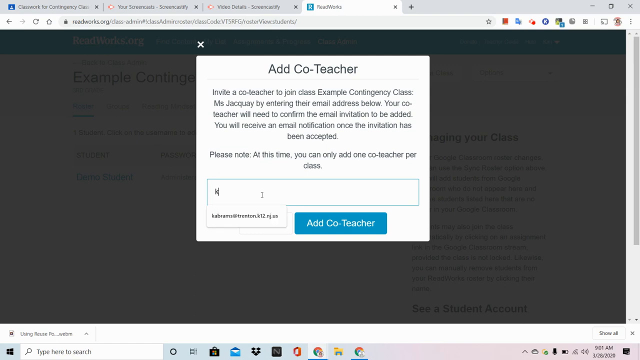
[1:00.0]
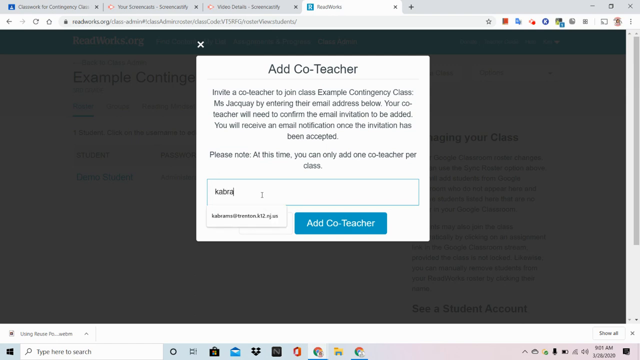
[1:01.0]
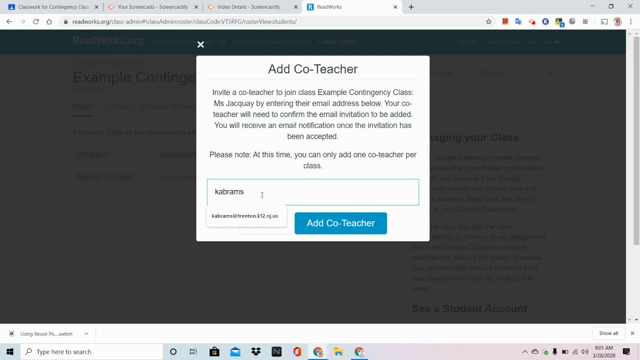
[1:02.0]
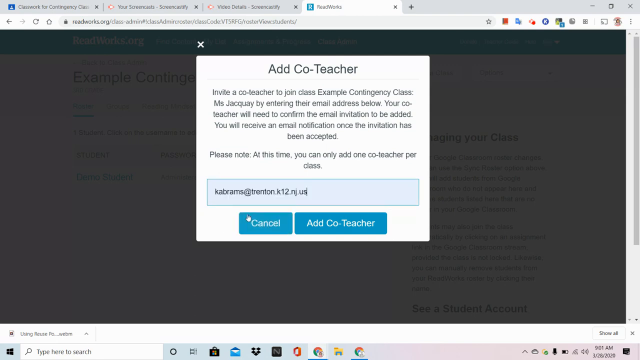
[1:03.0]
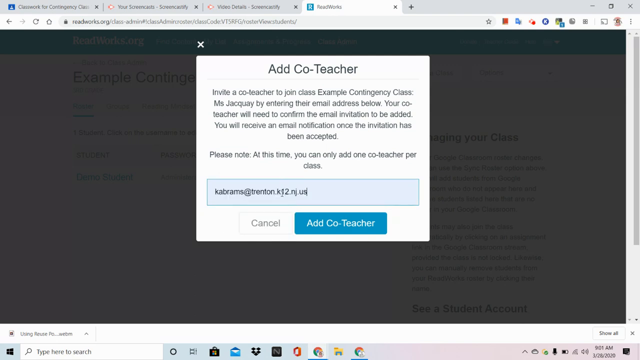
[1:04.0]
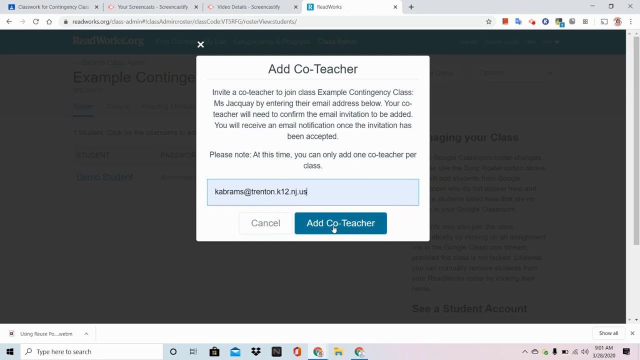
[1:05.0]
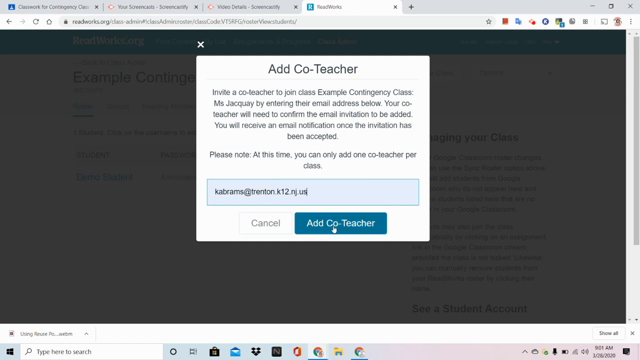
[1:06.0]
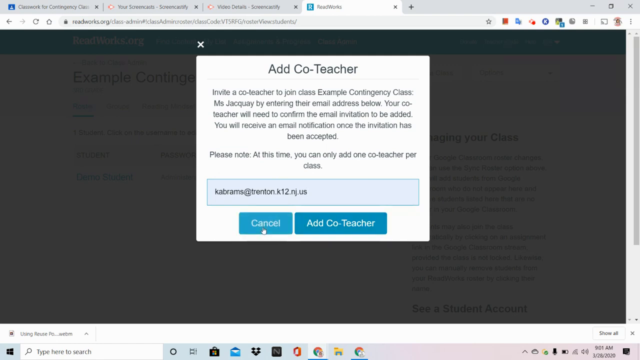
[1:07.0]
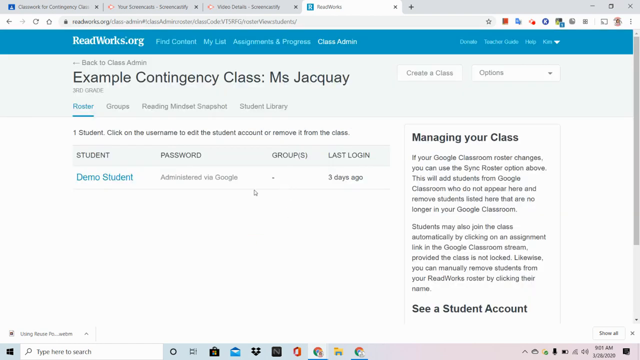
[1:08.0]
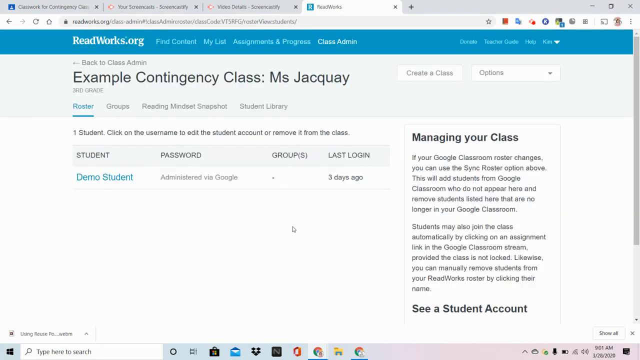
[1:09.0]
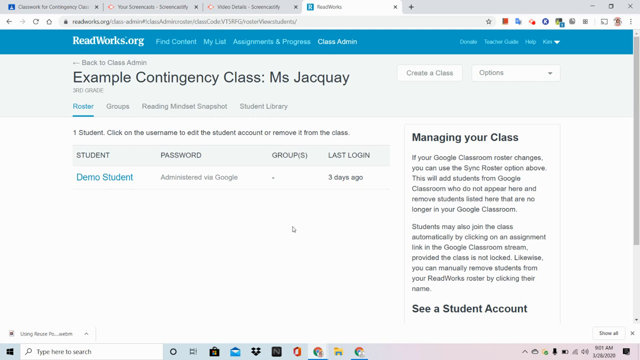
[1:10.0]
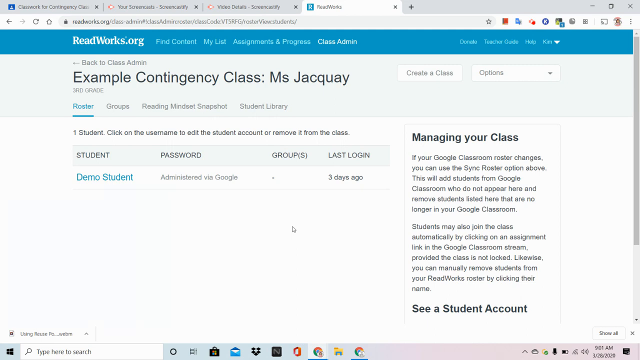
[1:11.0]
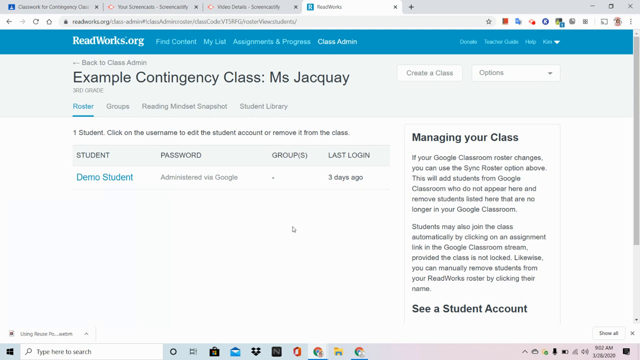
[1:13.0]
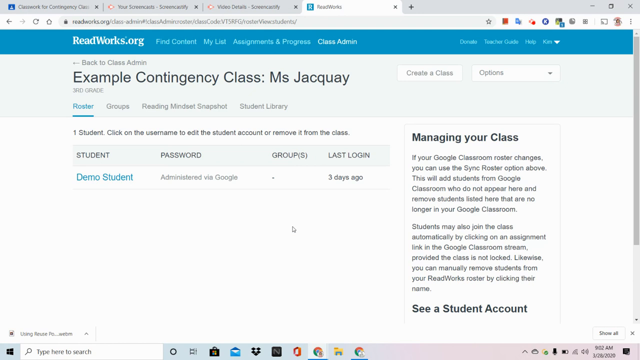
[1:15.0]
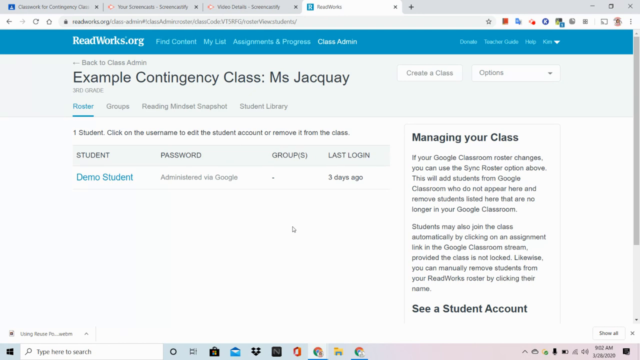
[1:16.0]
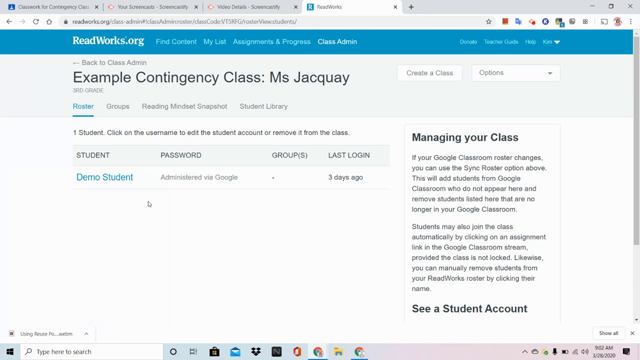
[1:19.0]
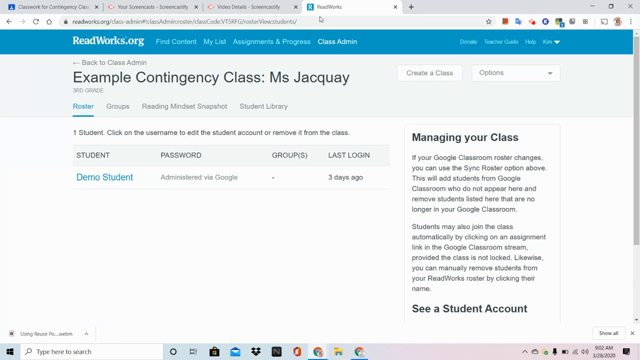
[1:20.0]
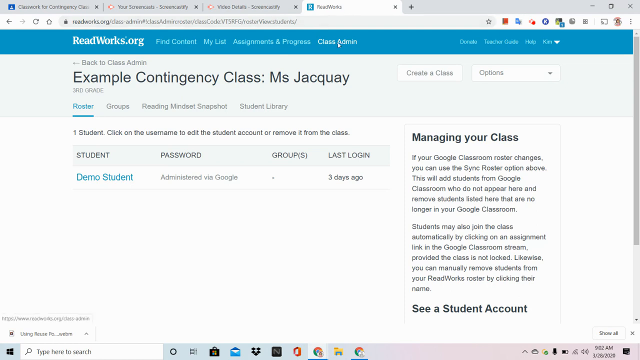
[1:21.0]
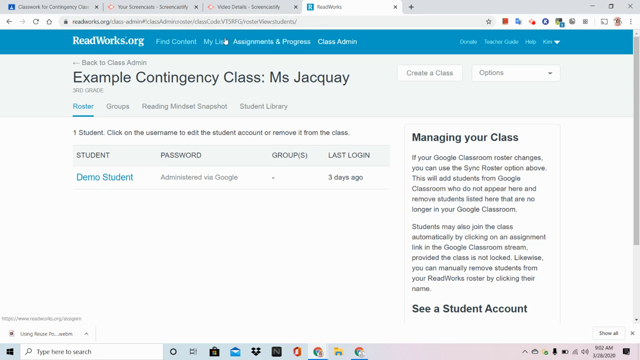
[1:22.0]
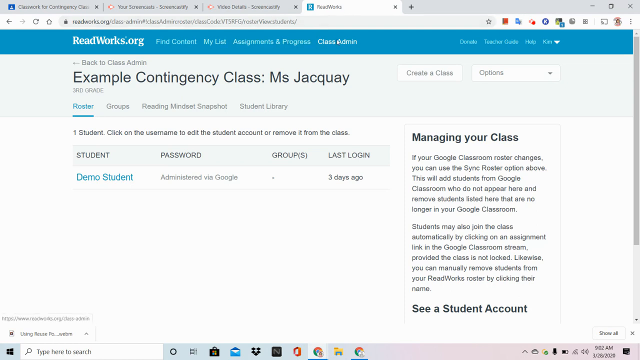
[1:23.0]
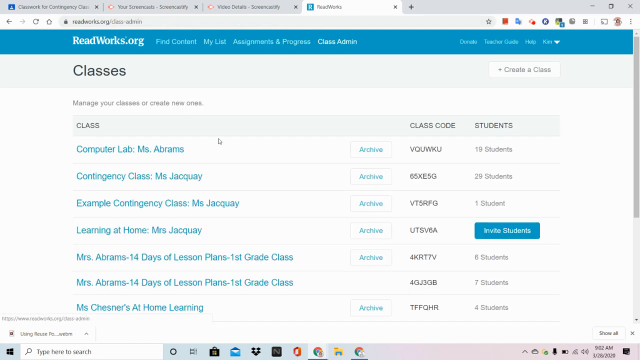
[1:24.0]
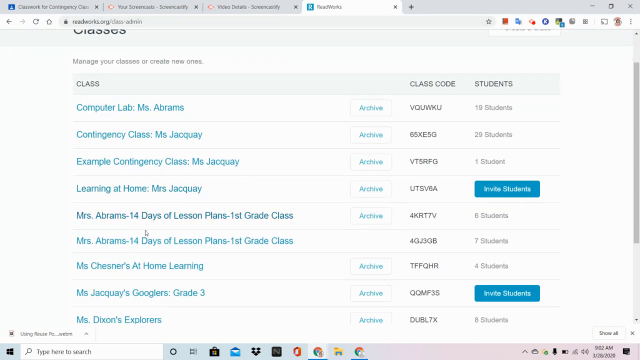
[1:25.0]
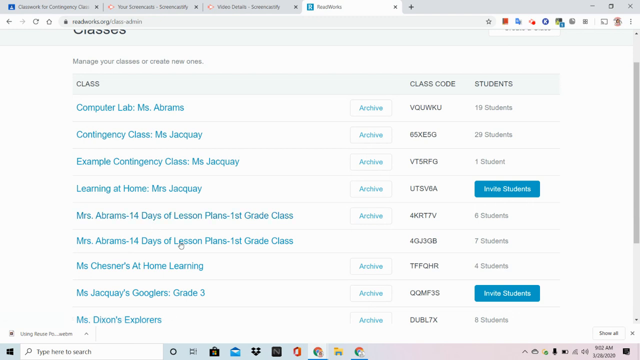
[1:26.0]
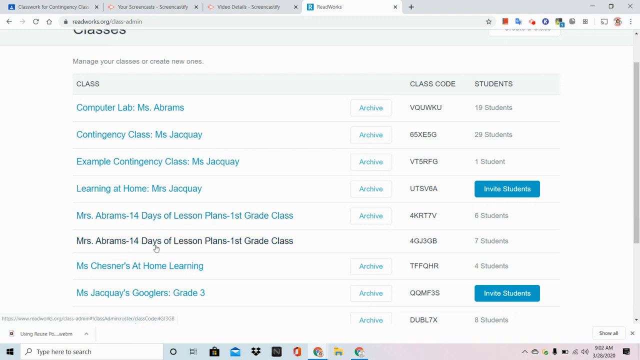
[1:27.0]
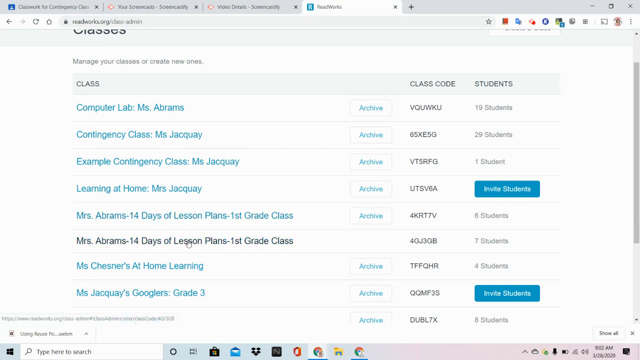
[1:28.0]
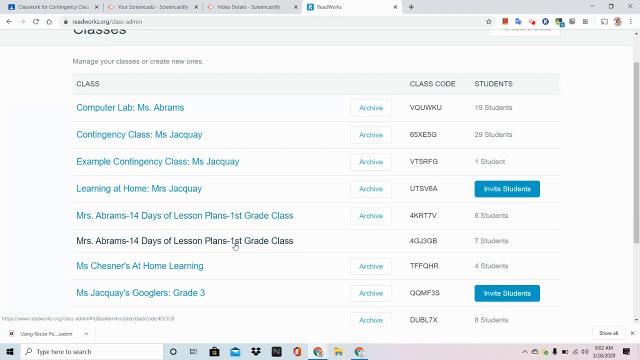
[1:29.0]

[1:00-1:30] On the Add Co Teacher pop-up, text is typed into the email input slot. After the email address is entered, the pointer clicks on cancel once again. The pointer pauses a bit, then clicks on class admin again, returning to the list of classes. The classes are taught by different teachers, and another teacher's name, Ms Dixon, appears at the bottom of the list; her name later disappears as the pointer scrolls back to the top.